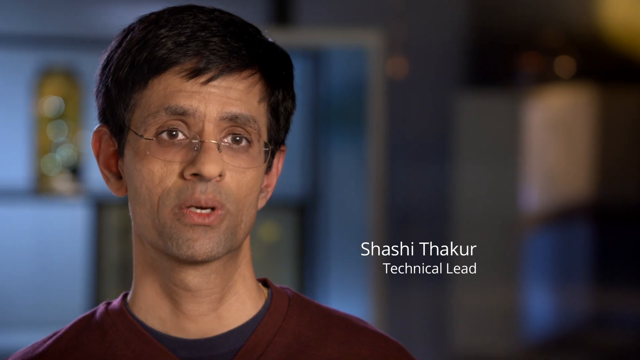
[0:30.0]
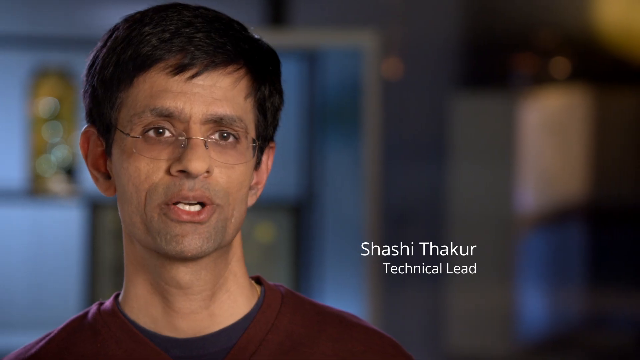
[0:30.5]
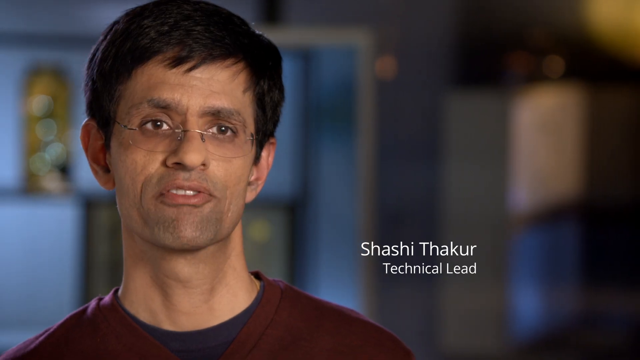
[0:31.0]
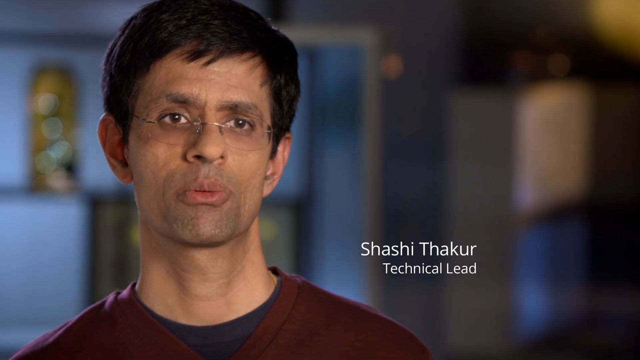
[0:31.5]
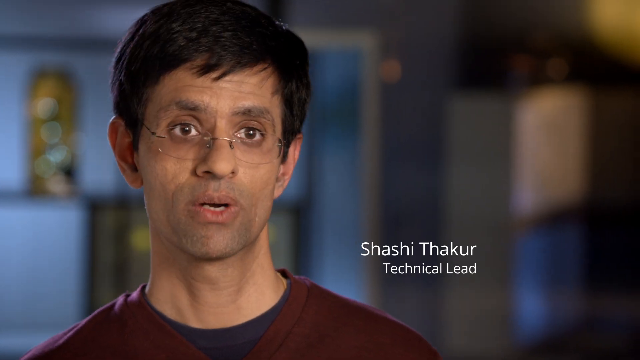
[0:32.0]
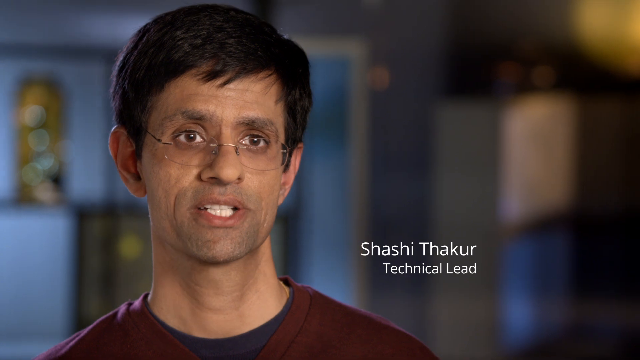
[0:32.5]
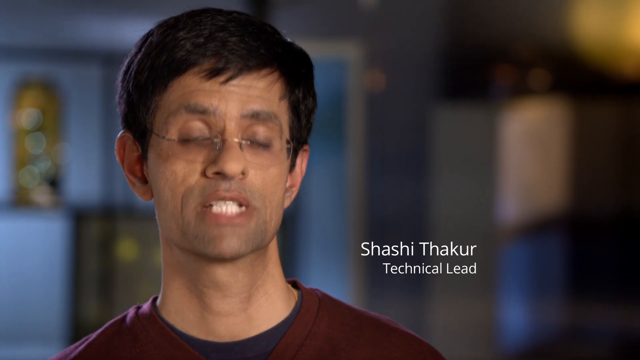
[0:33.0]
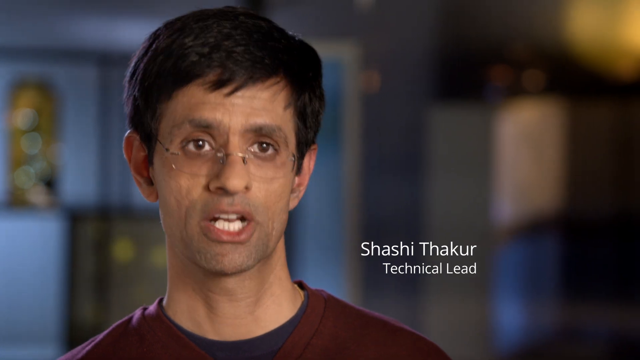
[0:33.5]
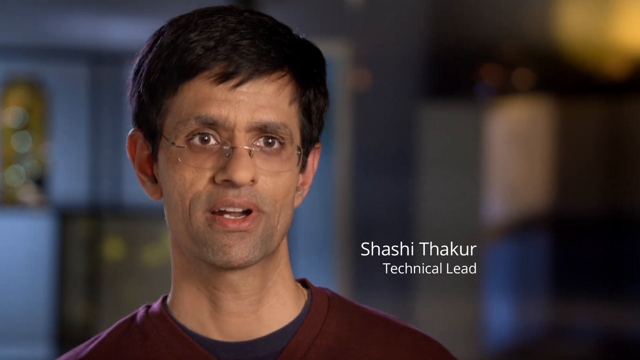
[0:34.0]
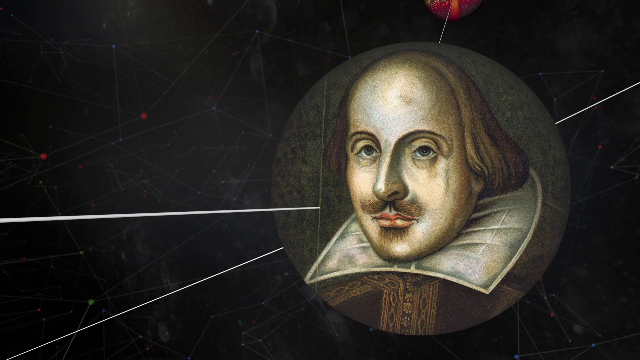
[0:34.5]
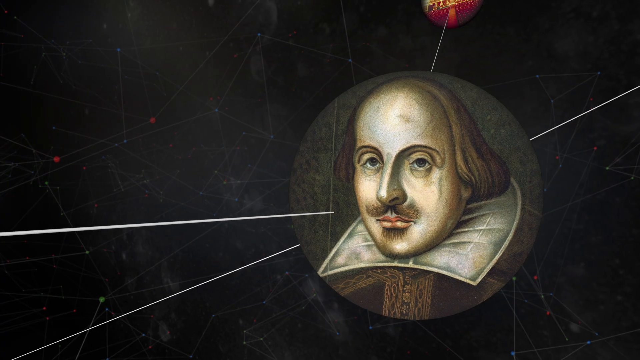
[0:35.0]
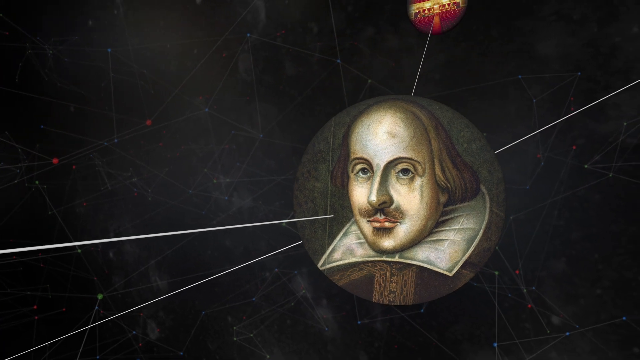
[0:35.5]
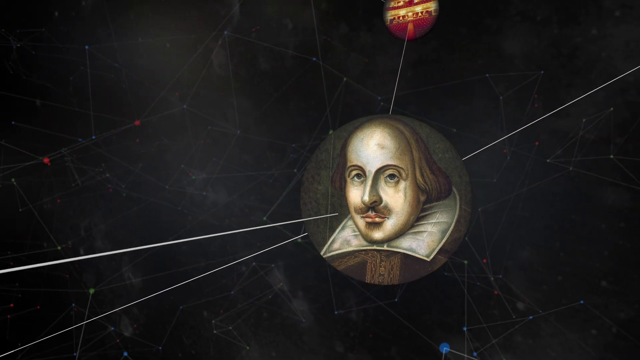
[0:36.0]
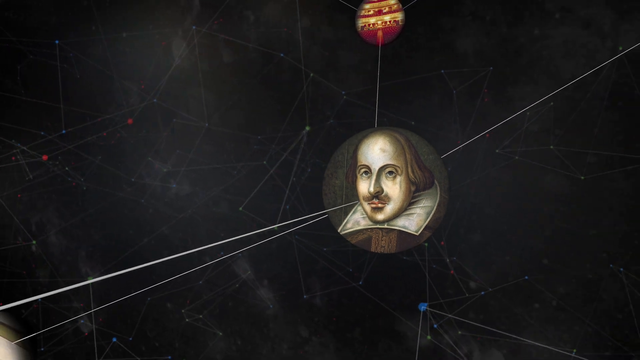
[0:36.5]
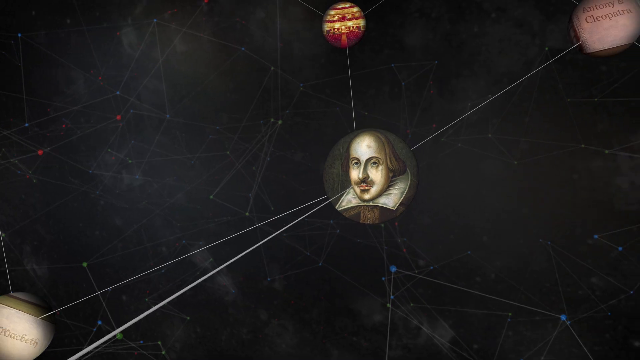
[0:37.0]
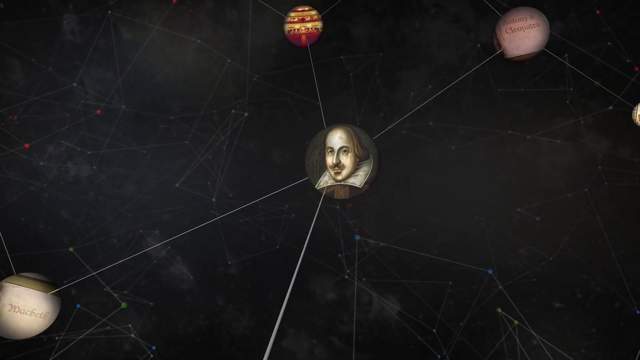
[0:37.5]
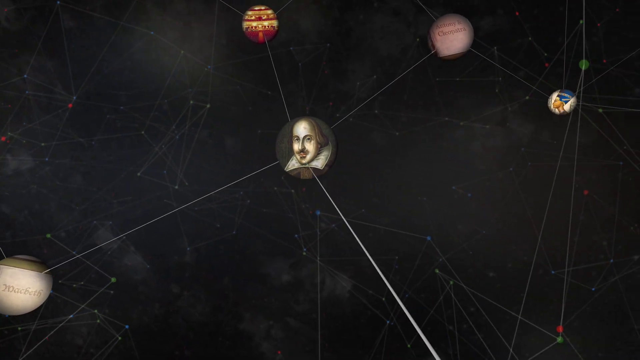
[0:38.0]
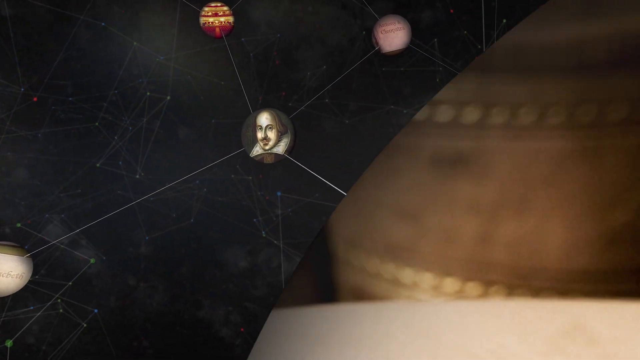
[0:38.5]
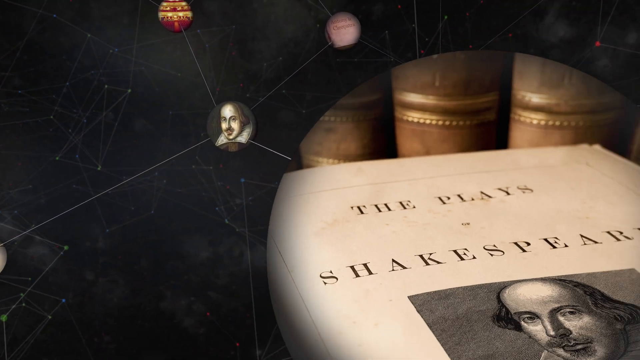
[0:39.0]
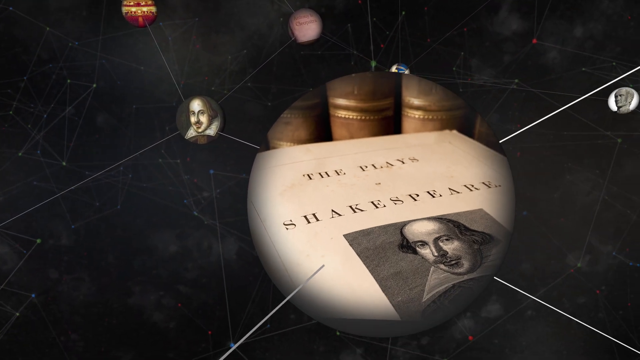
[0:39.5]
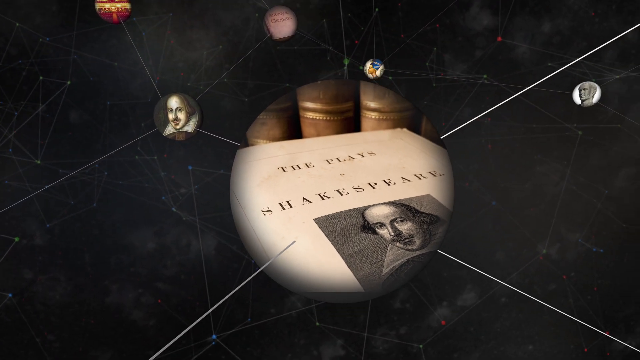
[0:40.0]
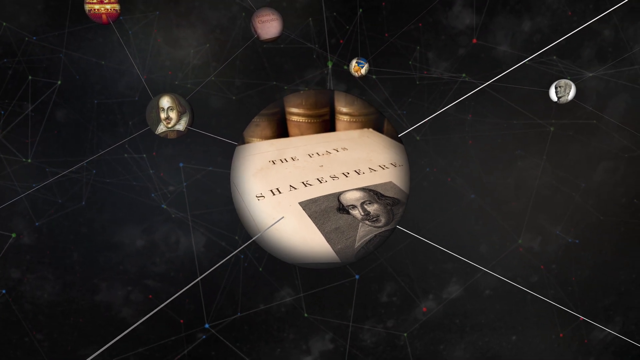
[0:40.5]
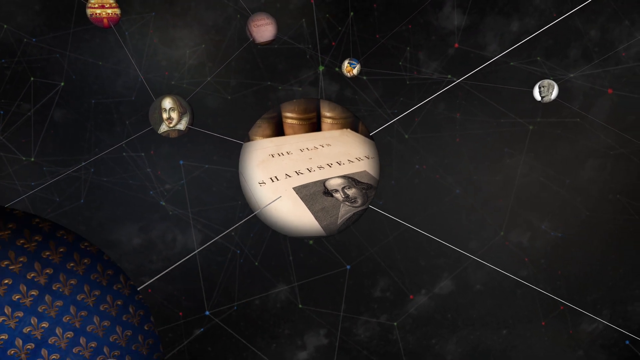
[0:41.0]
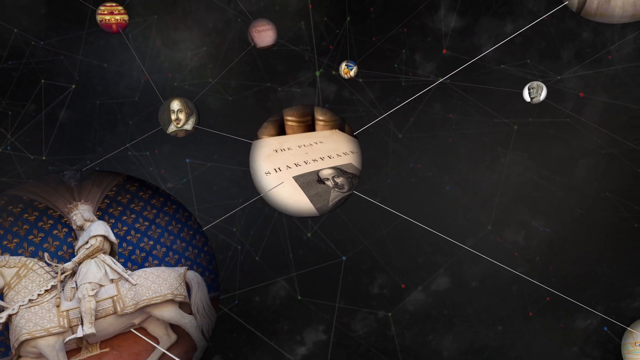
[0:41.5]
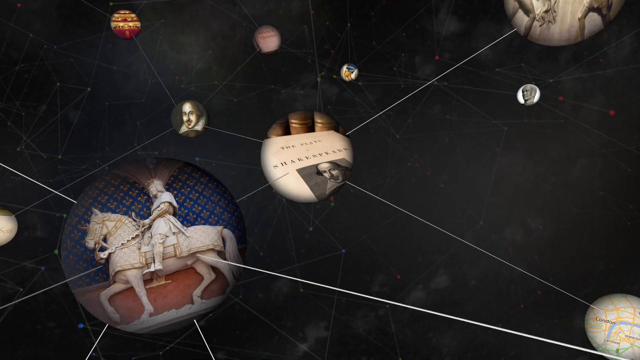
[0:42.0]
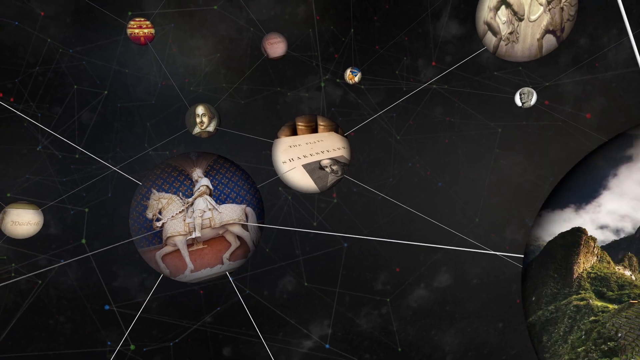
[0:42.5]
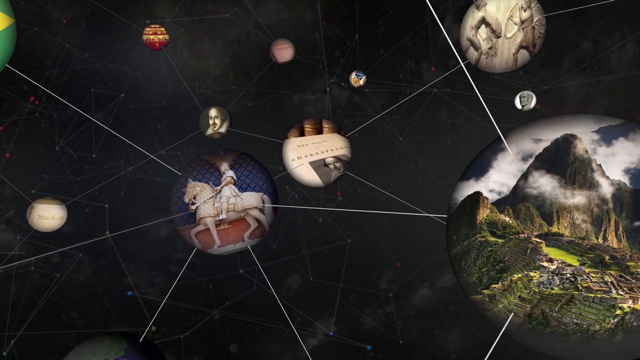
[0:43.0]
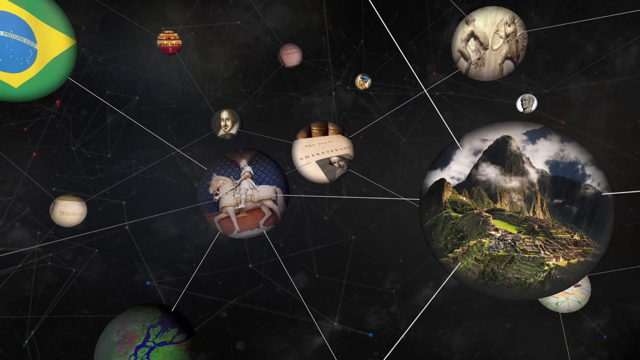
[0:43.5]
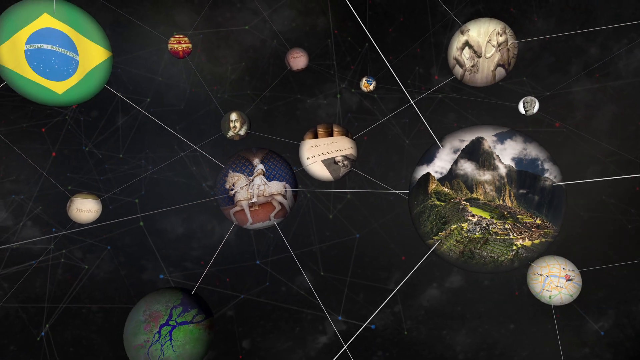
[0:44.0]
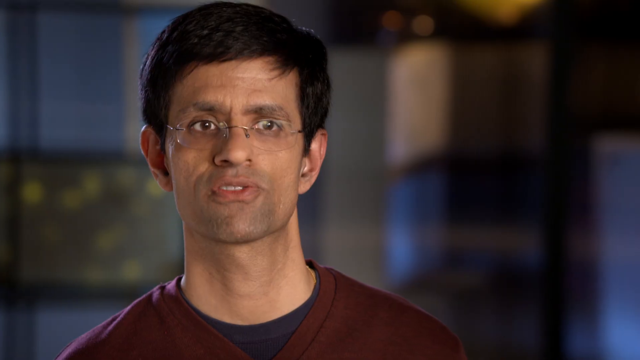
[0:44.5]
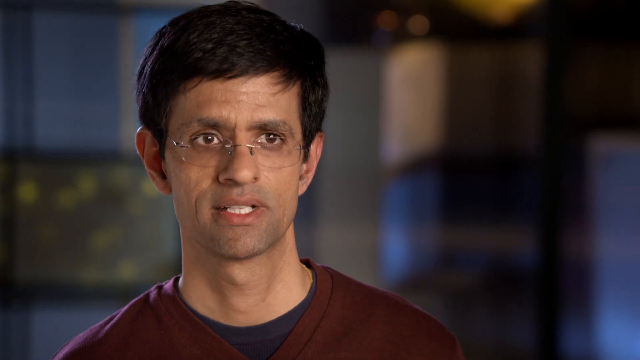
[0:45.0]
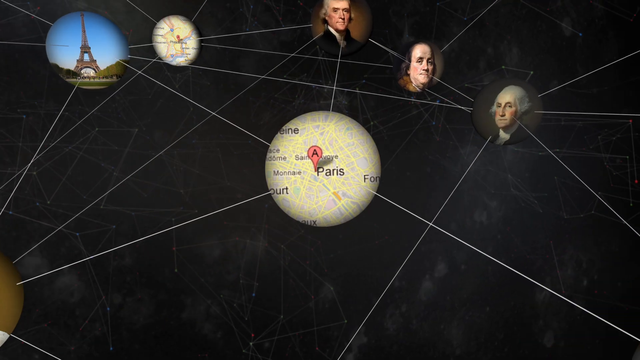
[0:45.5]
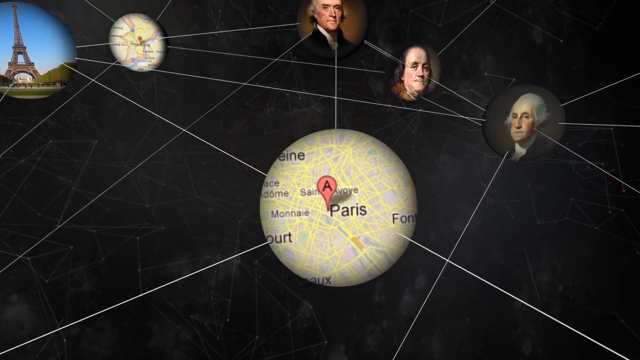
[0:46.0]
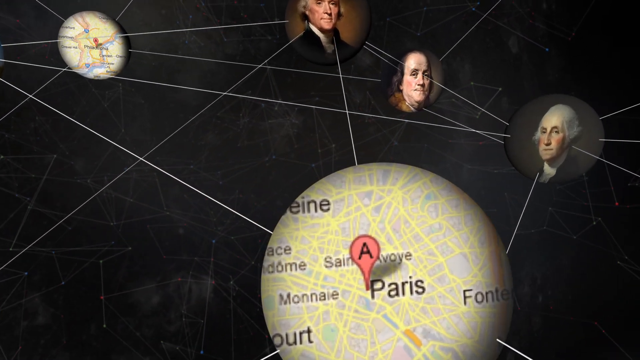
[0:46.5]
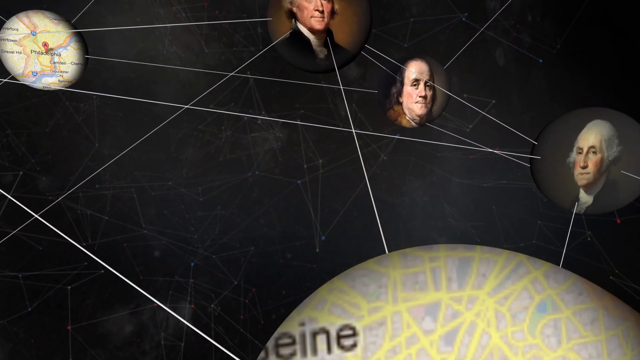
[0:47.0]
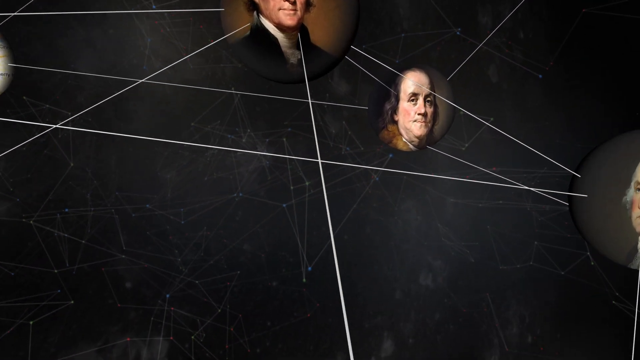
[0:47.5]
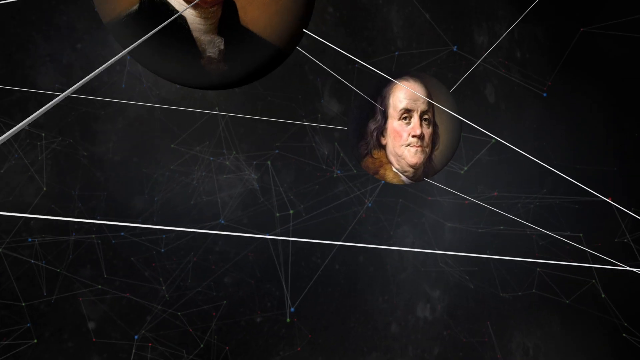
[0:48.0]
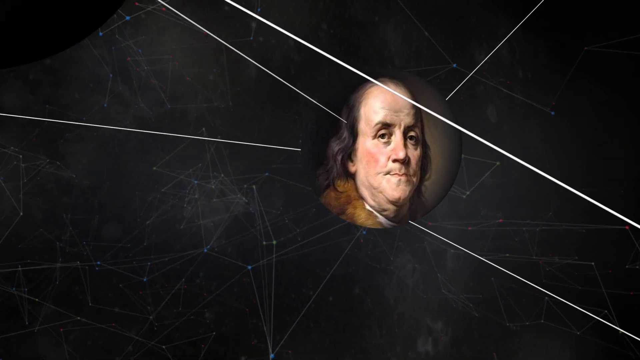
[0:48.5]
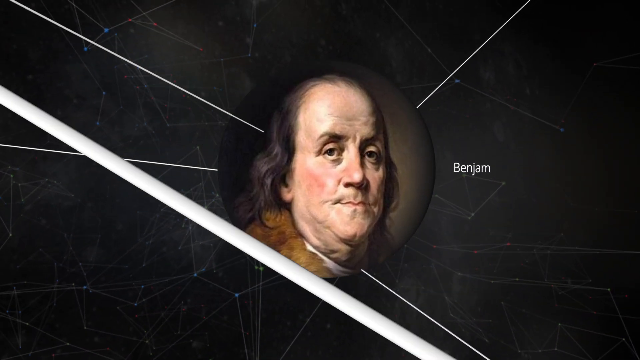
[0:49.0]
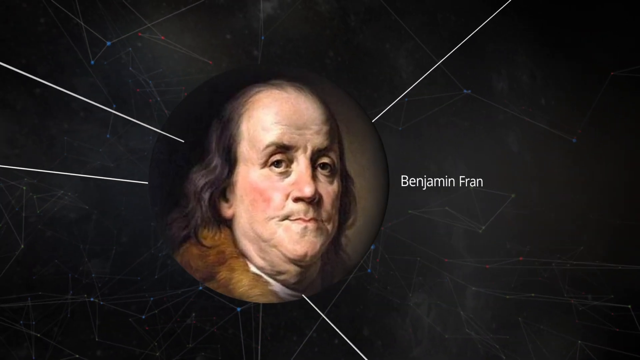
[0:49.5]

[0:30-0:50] A man talks to the camera beside the text "Shashi Thakur, technical lead". He is in a room with a sort of blue-gray background that is blurred enough that the objects cannot be made out exactly, though there seems to be some kind of case or display behind him. He has dark hair and wears rimless glasses. The video transitions to an image of a man in a sort of Renaissance-era costume with a large white collar around his neck and longish, roughly chin-length hair, on a black background. Lines run from this image to another circle that says "The plays of Shakespeare", and more lines connect all the different dots together. Paris appears, as does a picture of Benjamin Franklin, along with other circles holding different information, forming nodes linked by lines to other circles.